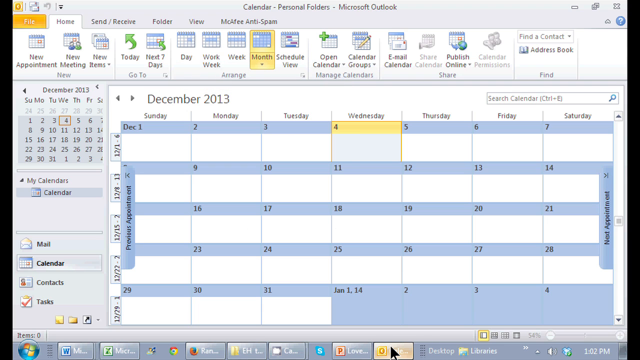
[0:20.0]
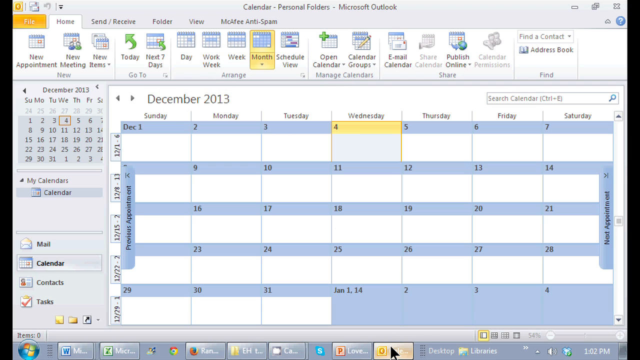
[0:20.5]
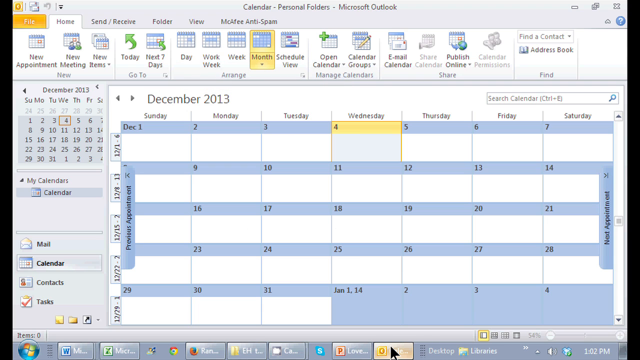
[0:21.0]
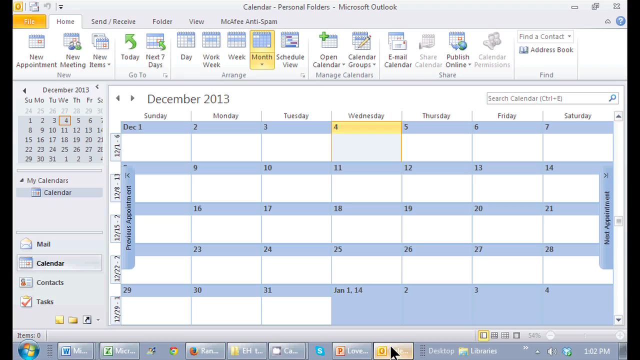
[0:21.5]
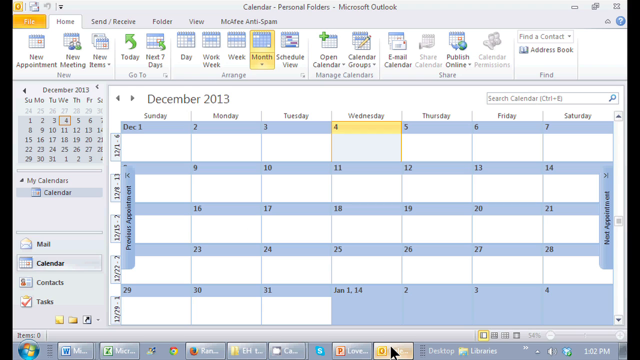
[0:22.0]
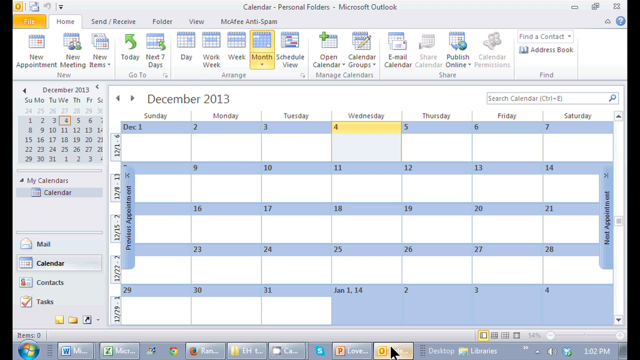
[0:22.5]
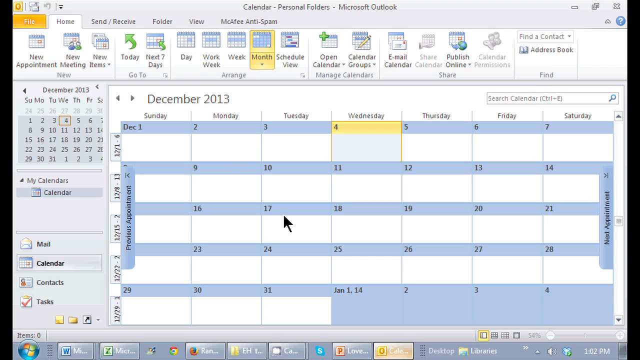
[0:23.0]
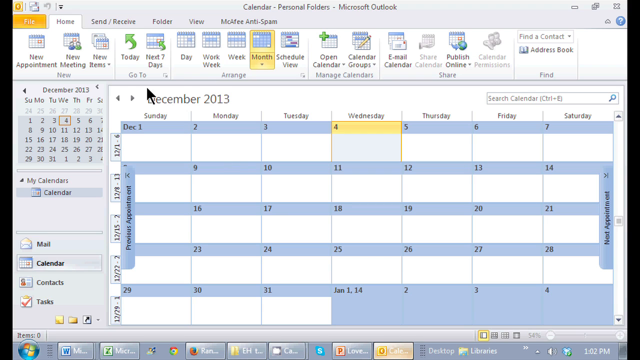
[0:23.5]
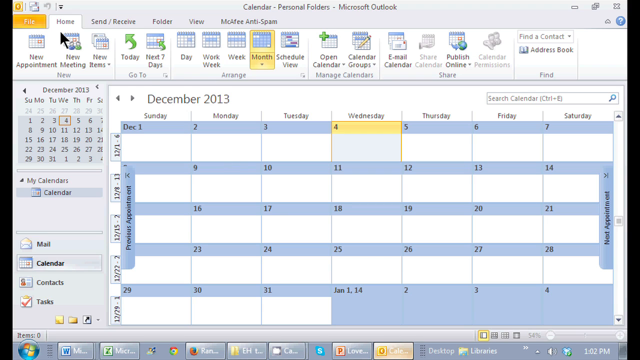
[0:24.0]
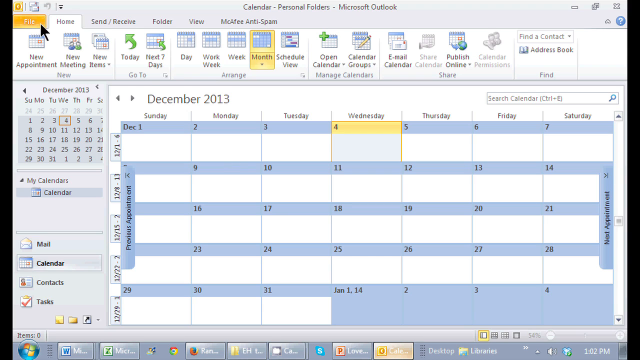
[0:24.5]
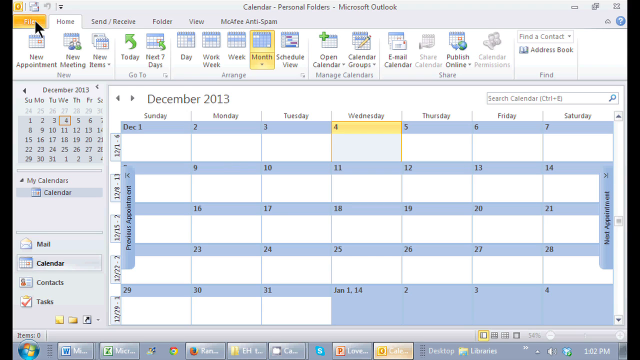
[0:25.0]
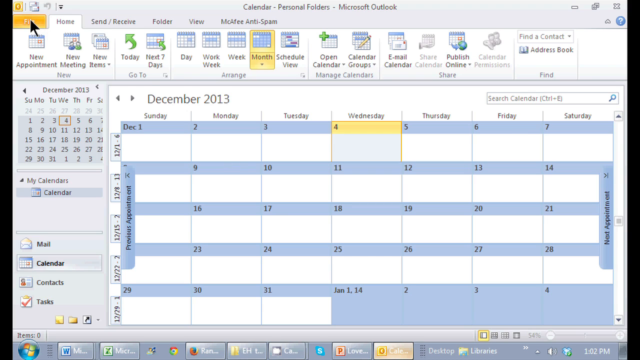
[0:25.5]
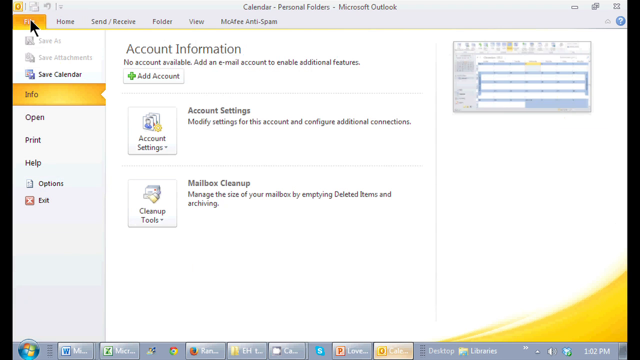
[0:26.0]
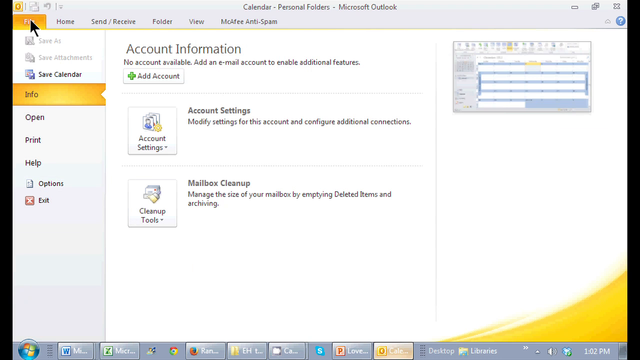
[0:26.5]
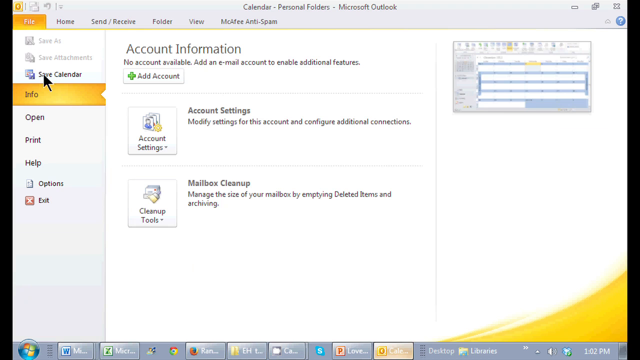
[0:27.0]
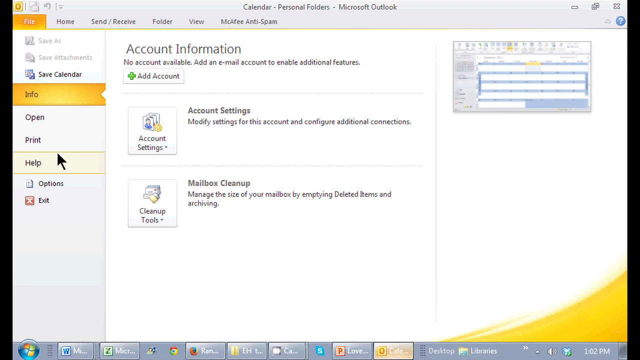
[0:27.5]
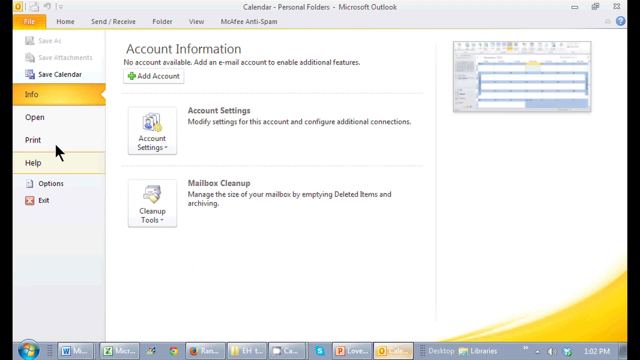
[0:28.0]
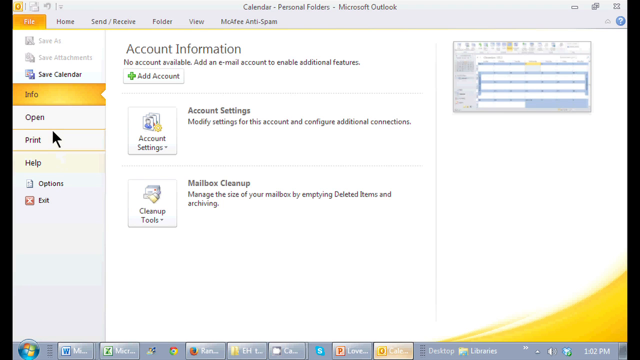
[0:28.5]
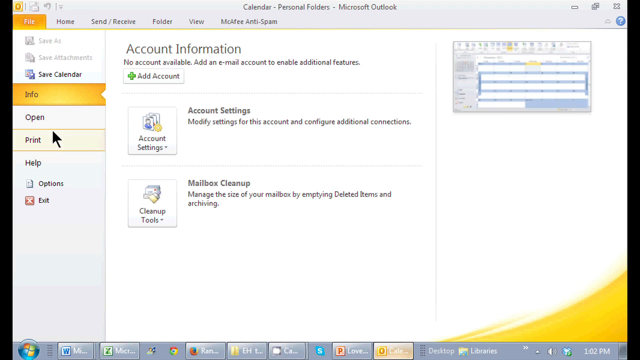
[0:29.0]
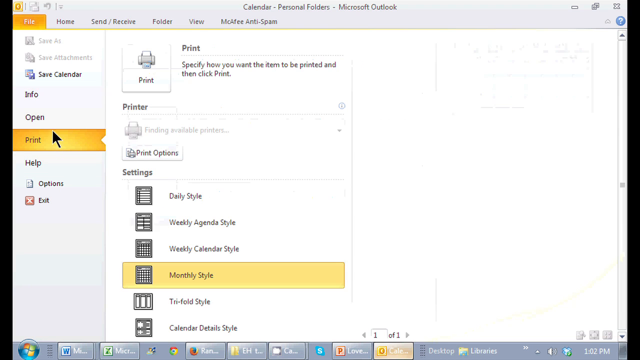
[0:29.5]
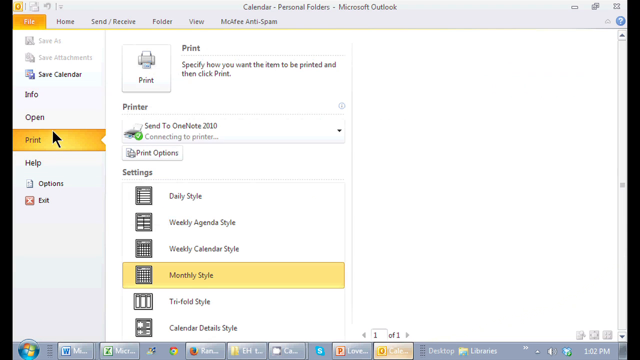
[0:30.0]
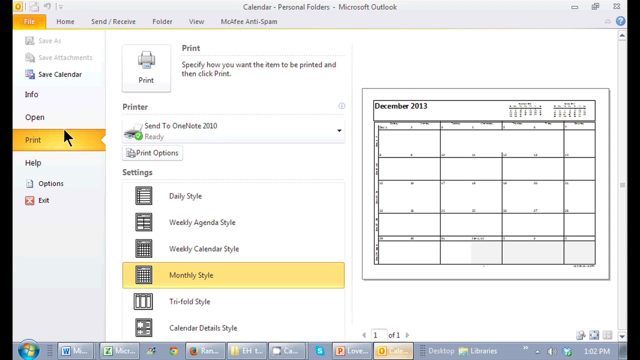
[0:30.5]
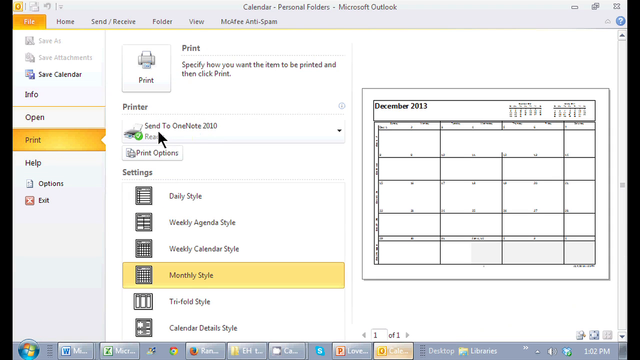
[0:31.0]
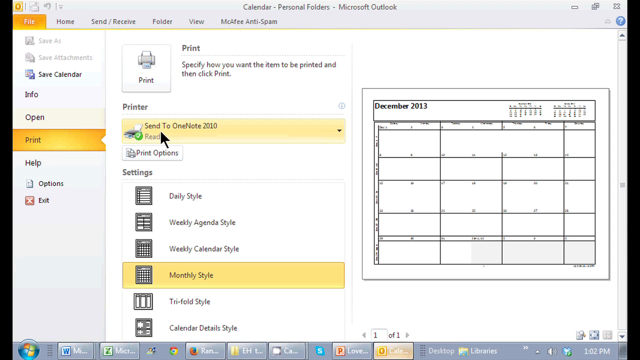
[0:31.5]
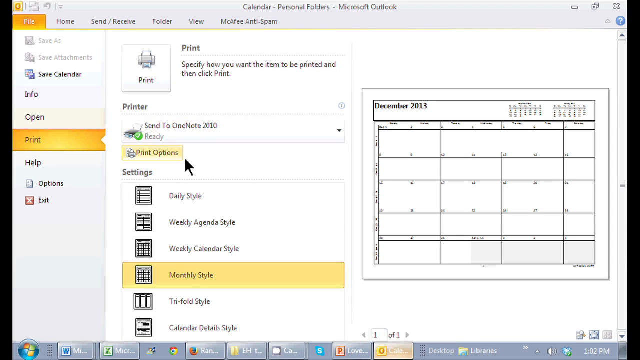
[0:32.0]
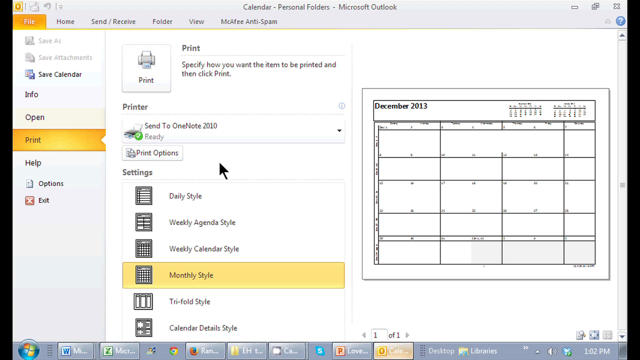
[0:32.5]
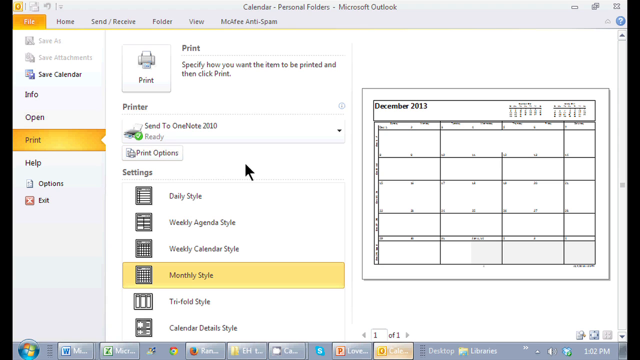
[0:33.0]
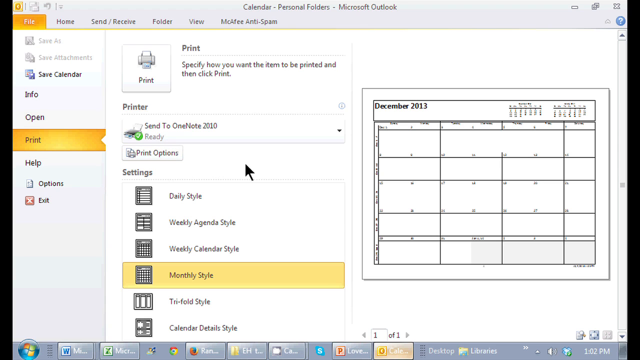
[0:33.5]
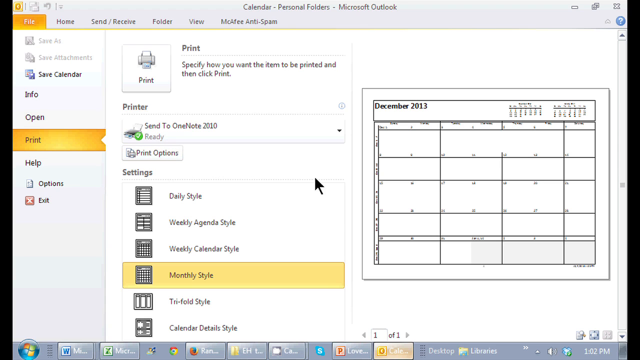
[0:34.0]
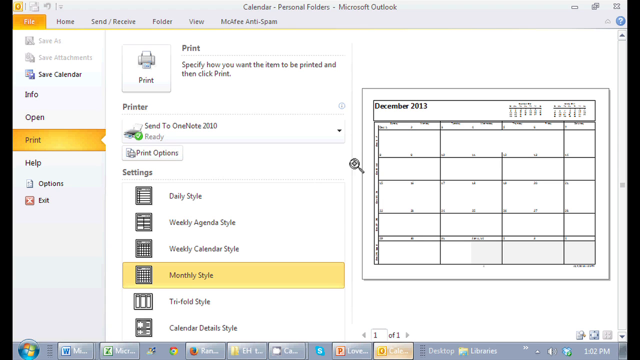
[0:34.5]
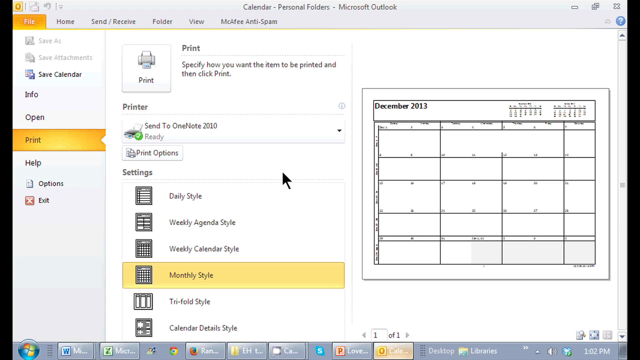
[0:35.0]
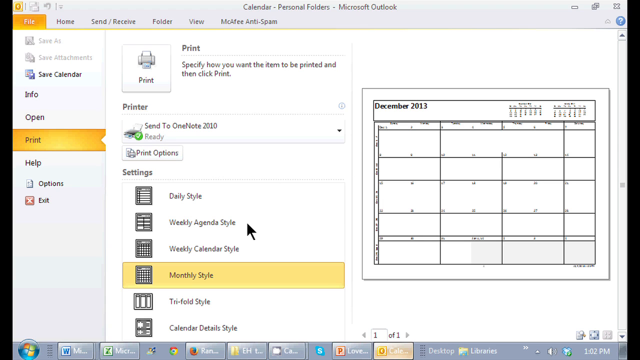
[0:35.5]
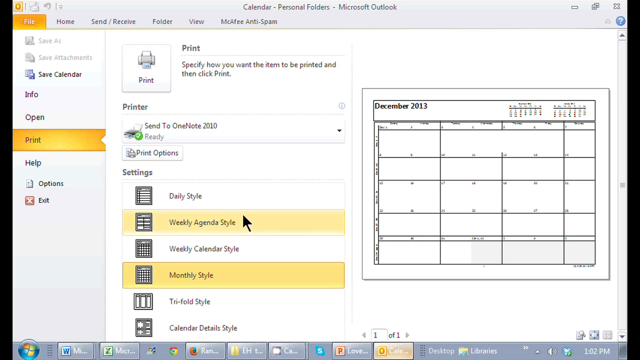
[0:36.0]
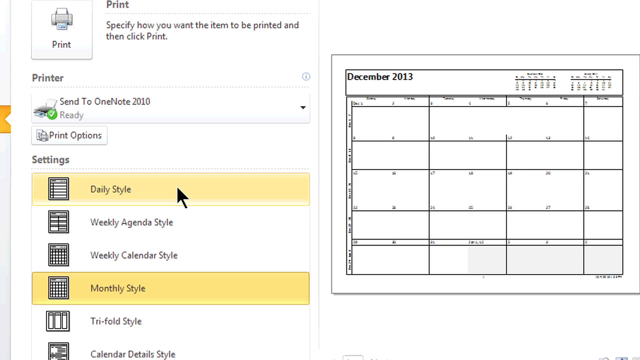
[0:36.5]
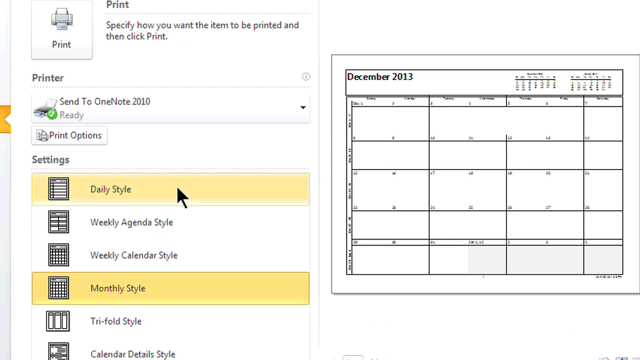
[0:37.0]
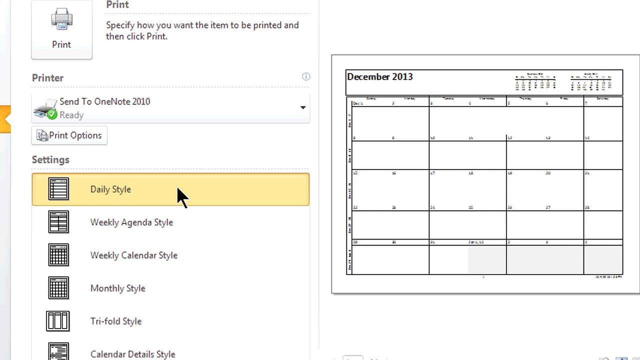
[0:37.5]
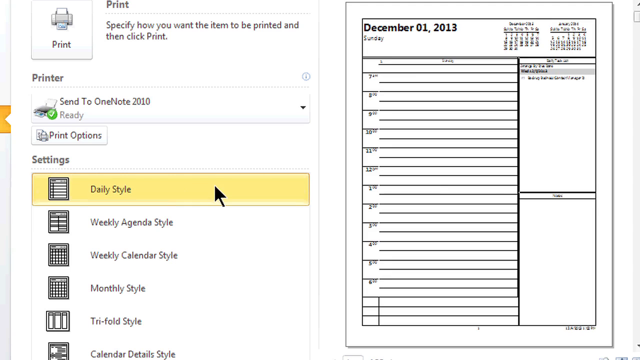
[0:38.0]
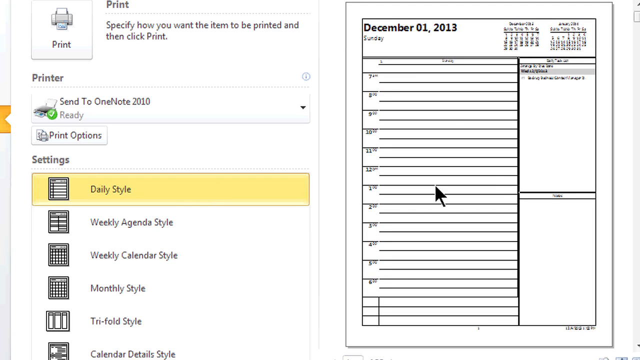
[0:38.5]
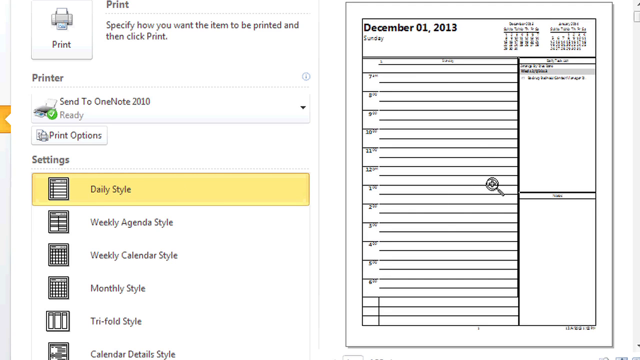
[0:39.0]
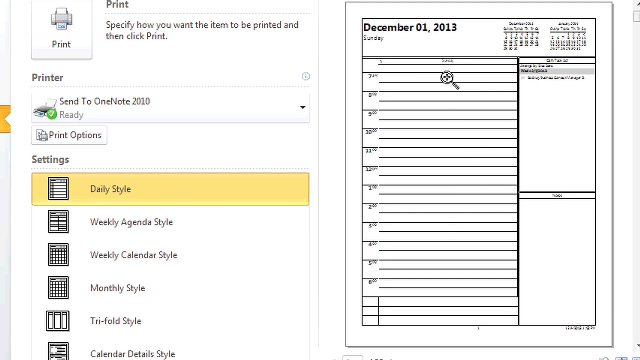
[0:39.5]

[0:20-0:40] An application is open on screen. A gray rectangle at the top middle reads "Calendar, Personal Folders, Microsoft Outlook." At the top right are three small icons: an X, two attached squares, and a minus sign. At the top left are categories to choose from, including "File," "Home," "Send," "Receive," "Folder," and "View." Below that, from left to right, are calendar-like icons labeled "New Appointment," "New Meeting," and "New Items." The next section says "Today" and "Next Seven Days," and the one after that says "Day," "Work Week," "Week," "Month," "Schedule," and "View." Below these is a calendar showing December 2013, with the month section highlighted in light yellow. The person stays on this page briefly, then moves the mouse cursor to the top left, clicks the File button, scrolls down to the word "Print," and clicks it. They scroll down and a calendar appears on the right. The monthly style is highlighted with a yellow background. They zoom in a little on that section and select the daily style, which changes the image on the right to a daily calendar for December 1st, 2013.